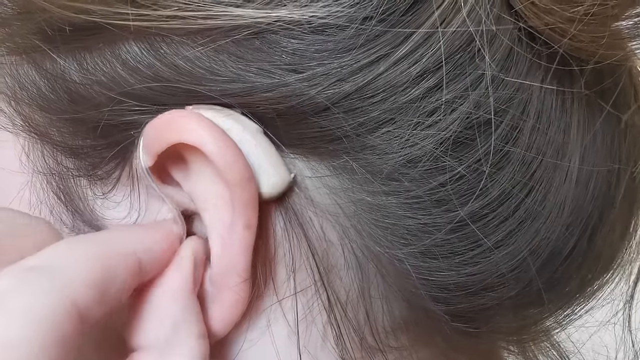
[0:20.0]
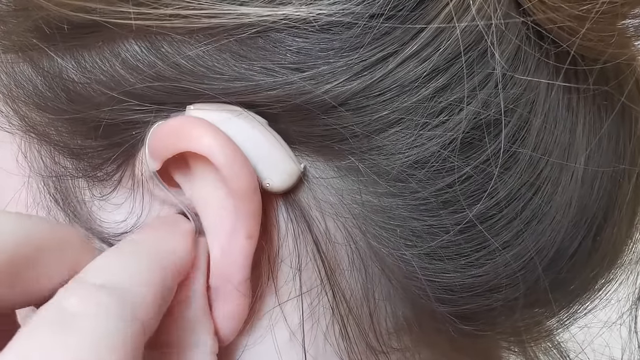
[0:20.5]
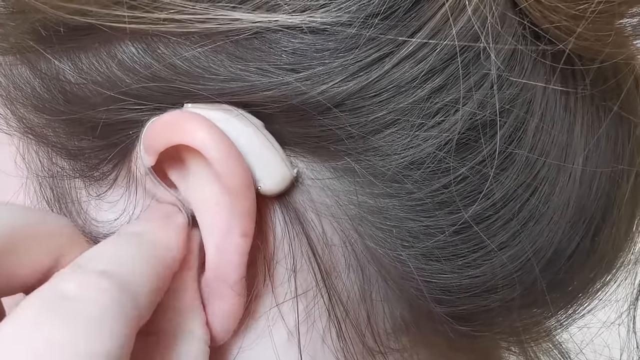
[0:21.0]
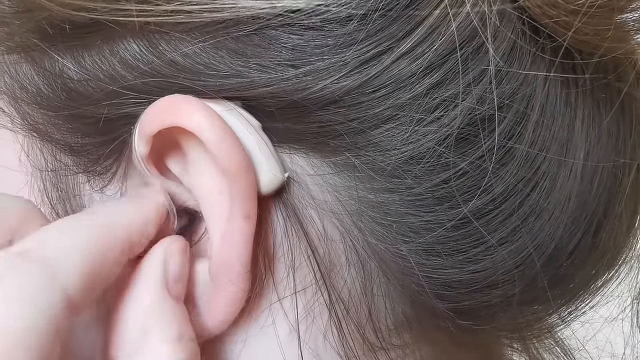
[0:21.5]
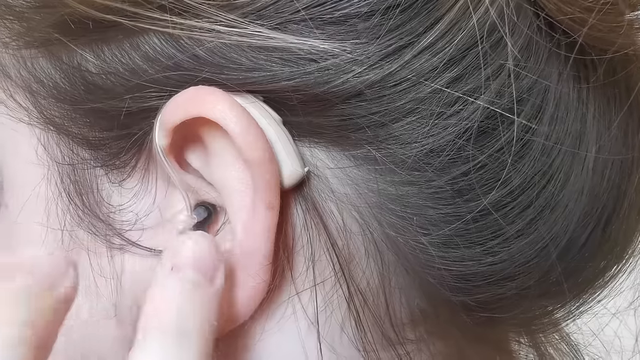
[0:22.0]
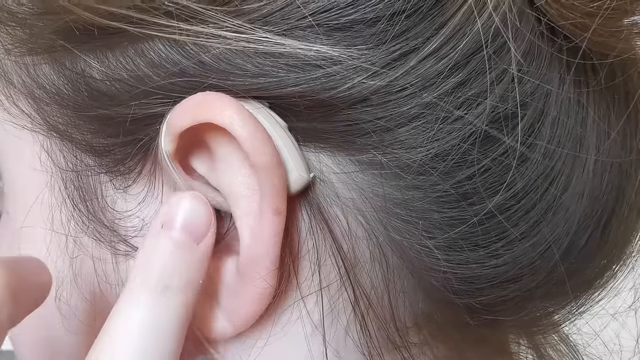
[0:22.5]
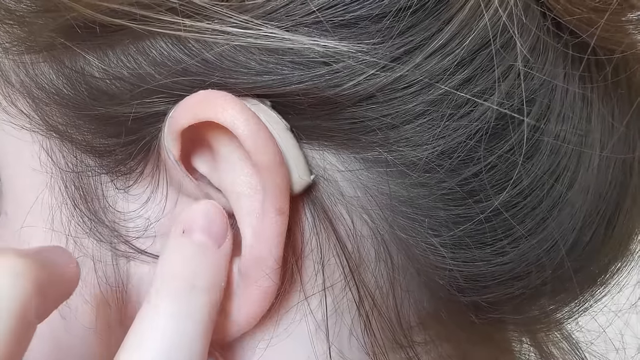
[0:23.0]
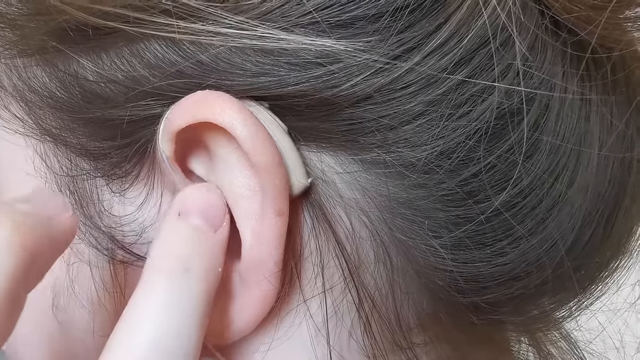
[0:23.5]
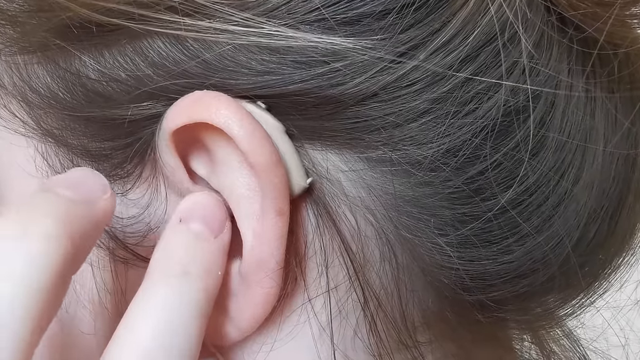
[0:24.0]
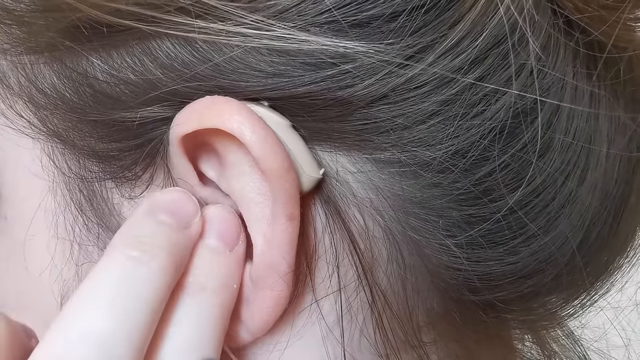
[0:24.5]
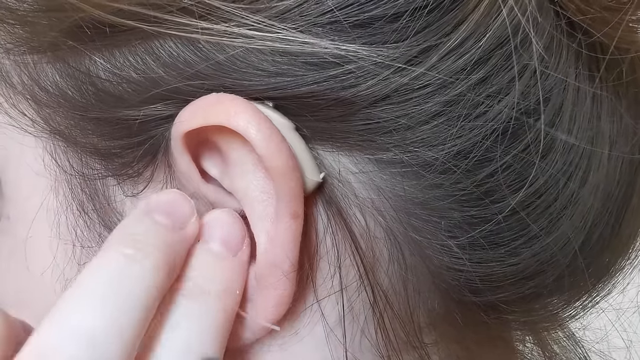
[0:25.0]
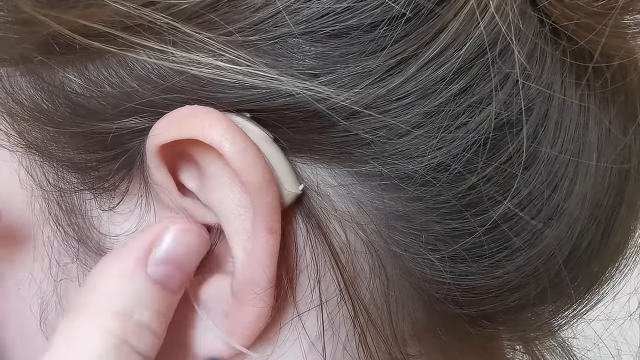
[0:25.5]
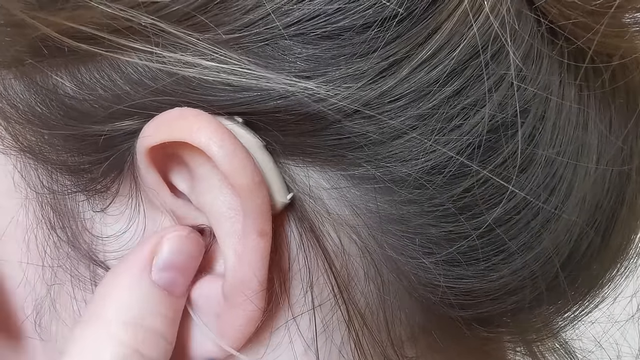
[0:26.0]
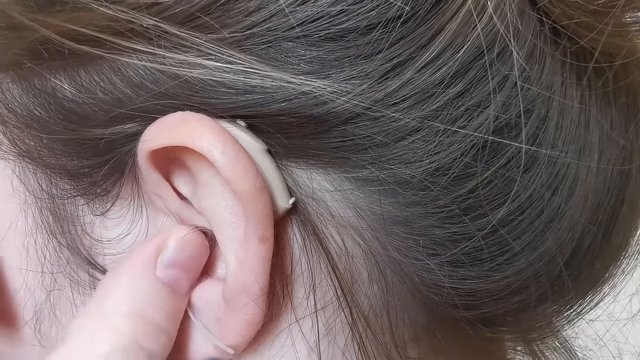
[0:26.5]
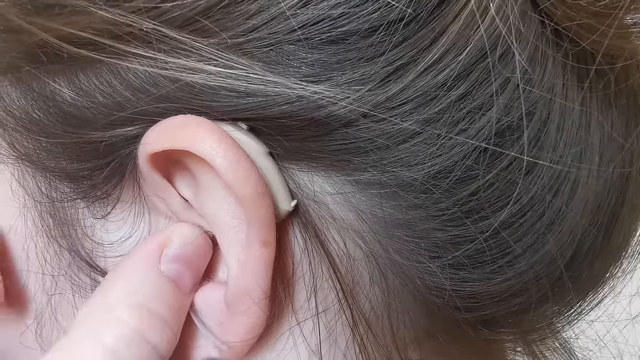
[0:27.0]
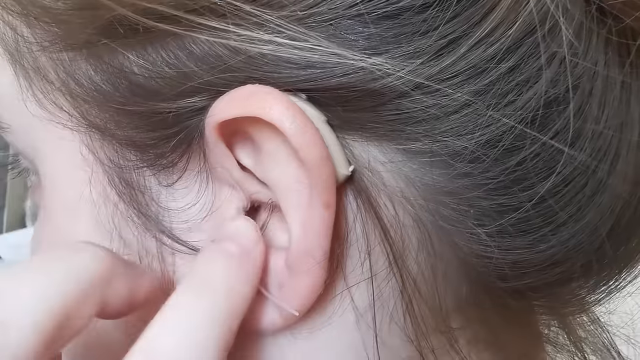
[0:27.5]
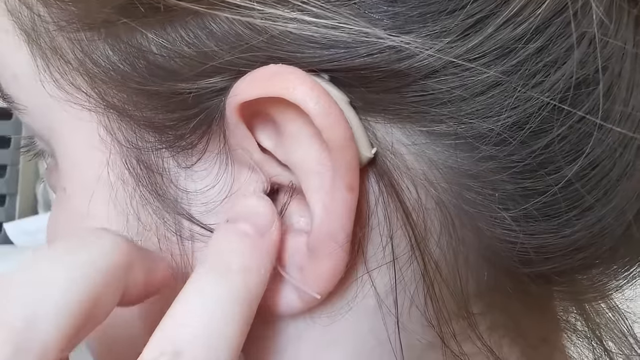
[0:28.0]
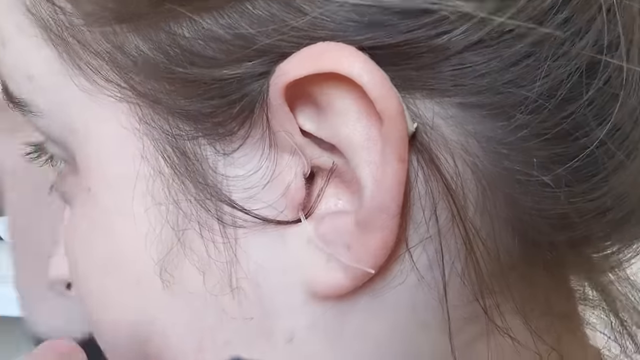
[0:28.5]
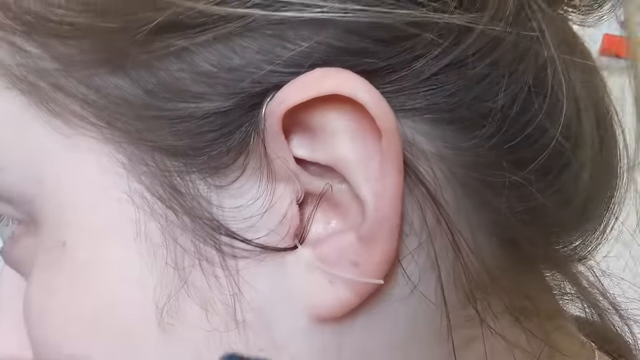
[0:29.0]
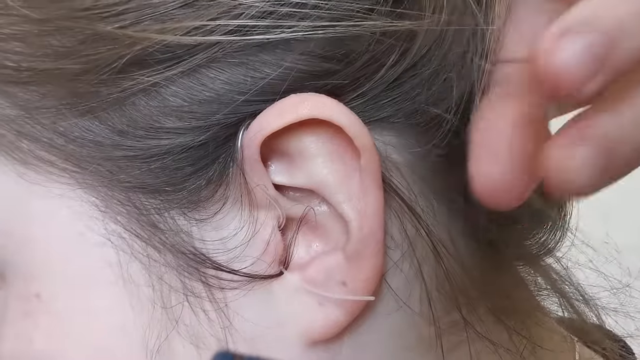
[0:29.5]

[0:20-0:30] A close-up shows a Caucasian person's left ear with a hearing aid installed over the ear, its tubing running into the front of the ear and then into the ear canal. The person's fingers hold the tubing and the piece that goes into the ear canal. The person has sandy brown hair. After the piece is inserted into the ear canal, the person presses on it to make sure it is properly placed. Once it is in place, the person's face is visible for a brief second before the shot ends.